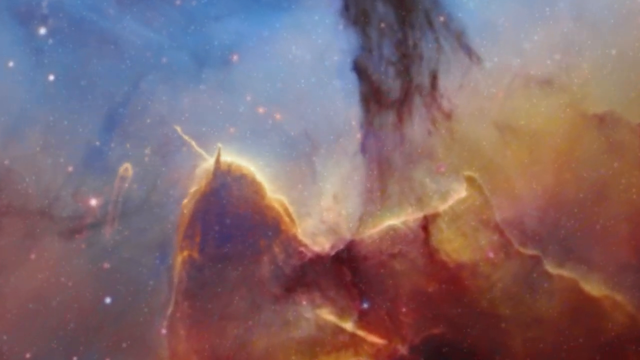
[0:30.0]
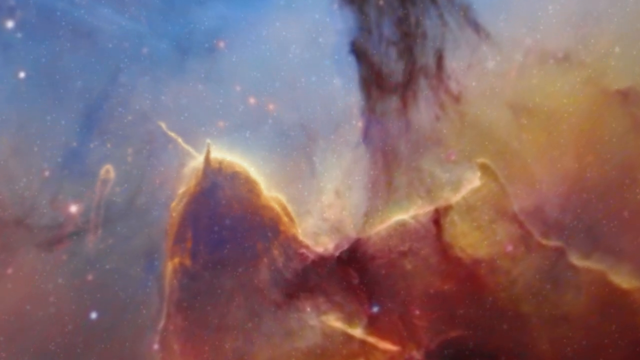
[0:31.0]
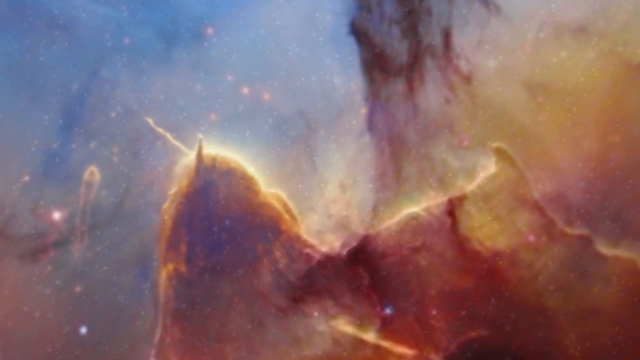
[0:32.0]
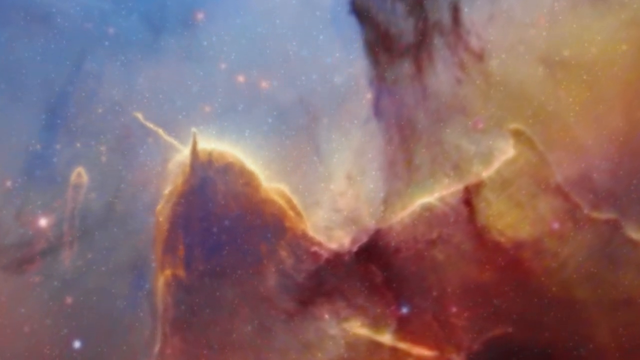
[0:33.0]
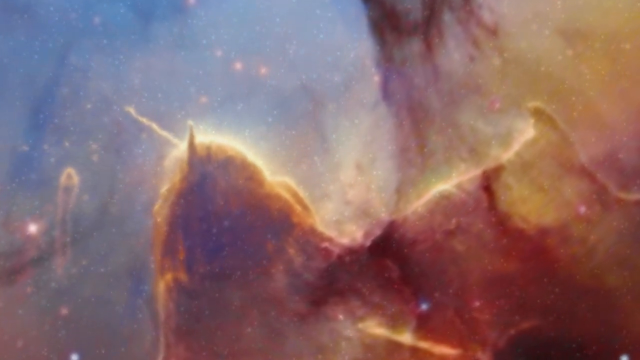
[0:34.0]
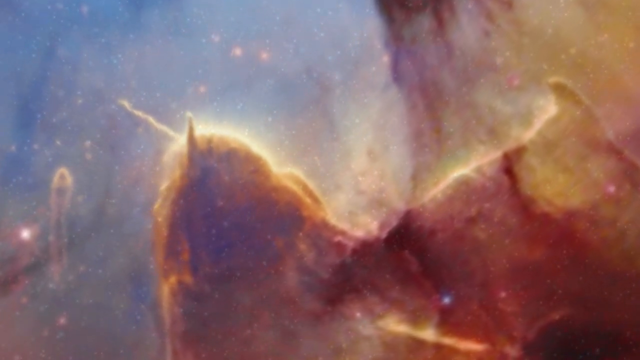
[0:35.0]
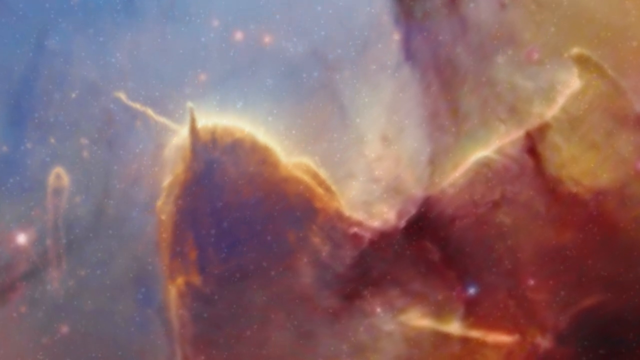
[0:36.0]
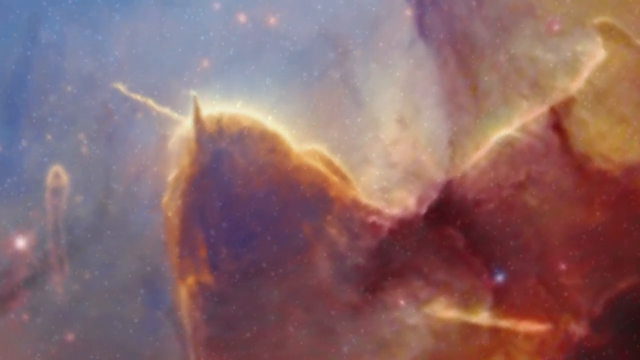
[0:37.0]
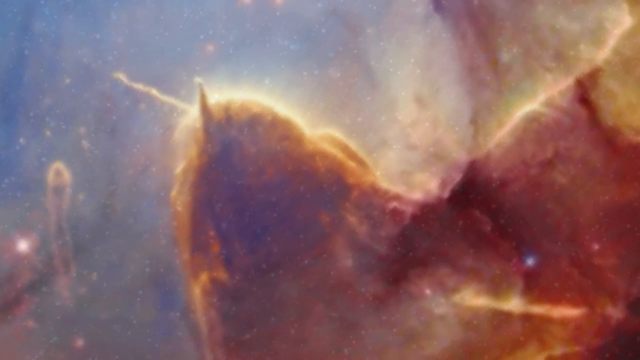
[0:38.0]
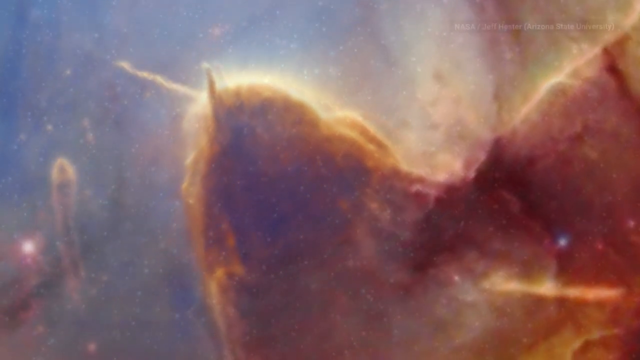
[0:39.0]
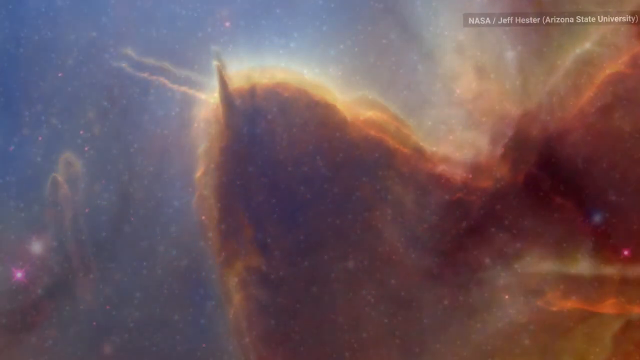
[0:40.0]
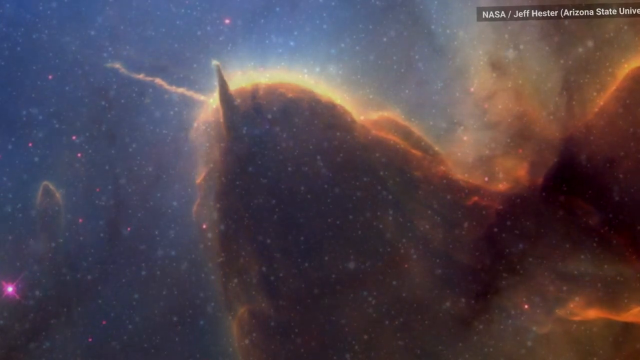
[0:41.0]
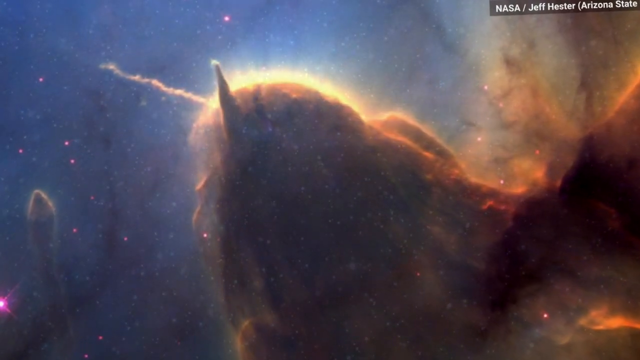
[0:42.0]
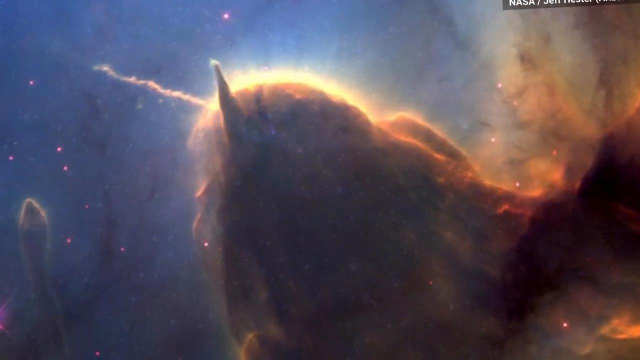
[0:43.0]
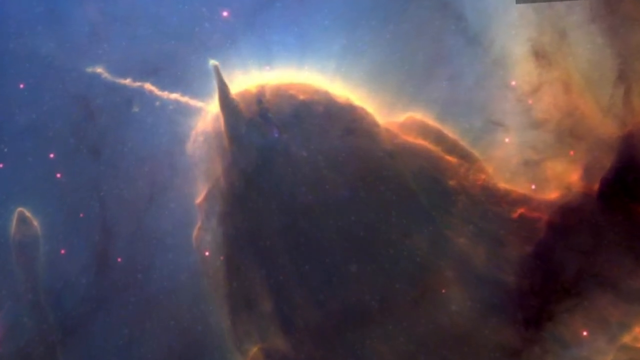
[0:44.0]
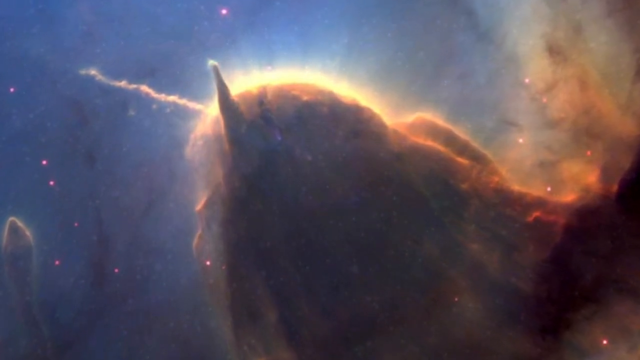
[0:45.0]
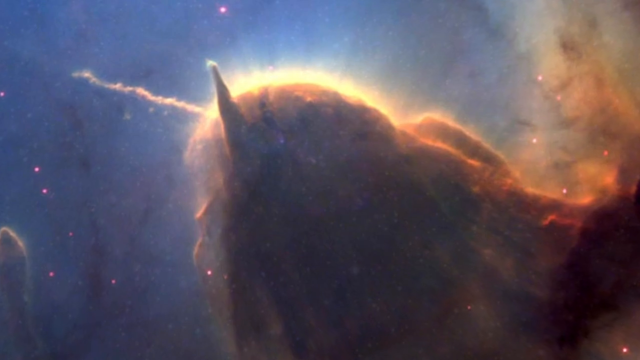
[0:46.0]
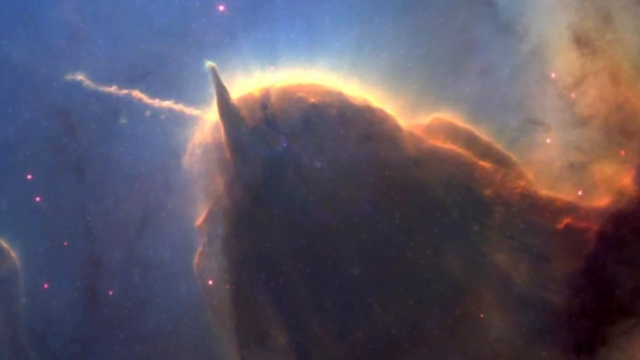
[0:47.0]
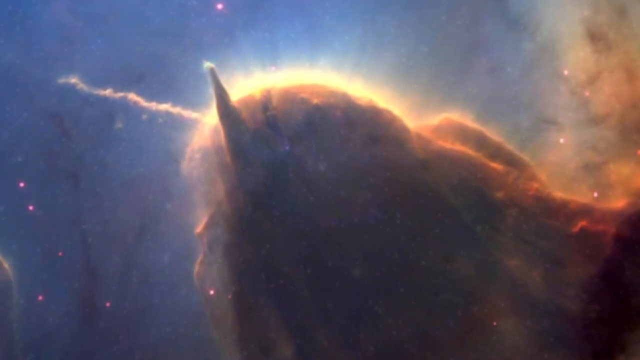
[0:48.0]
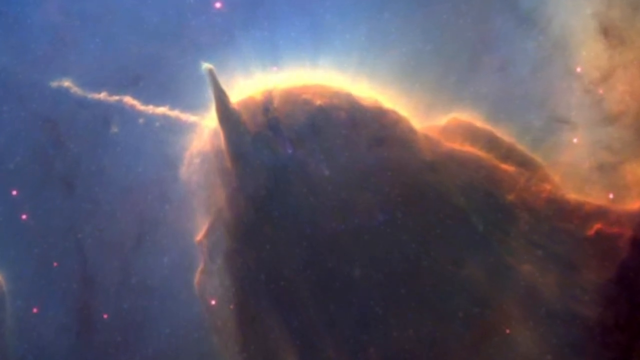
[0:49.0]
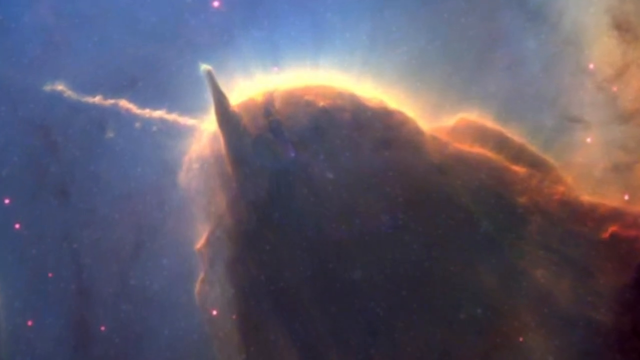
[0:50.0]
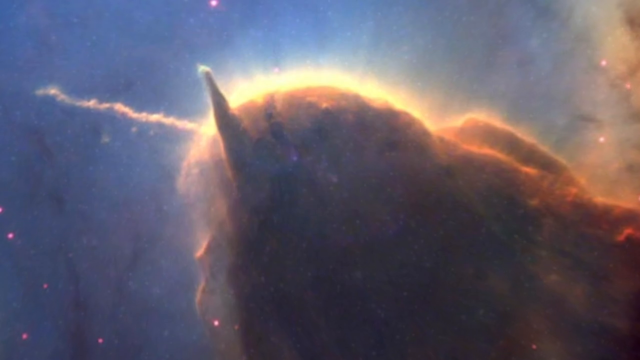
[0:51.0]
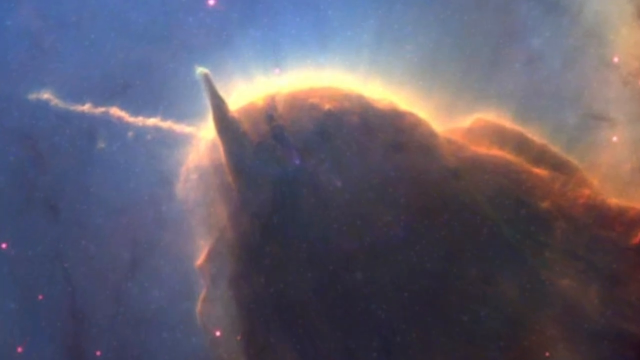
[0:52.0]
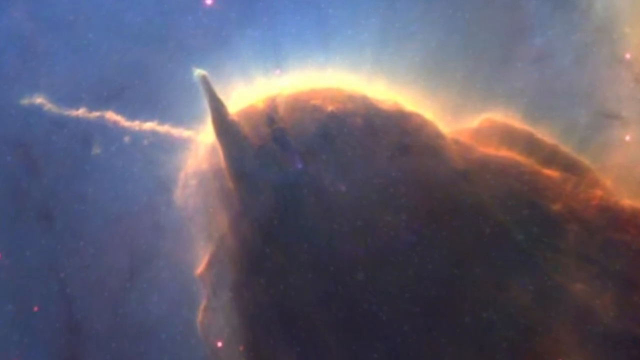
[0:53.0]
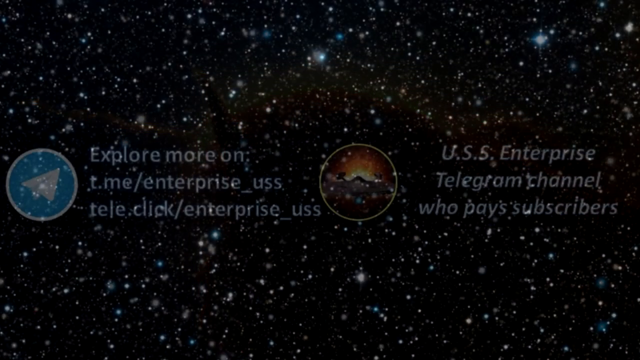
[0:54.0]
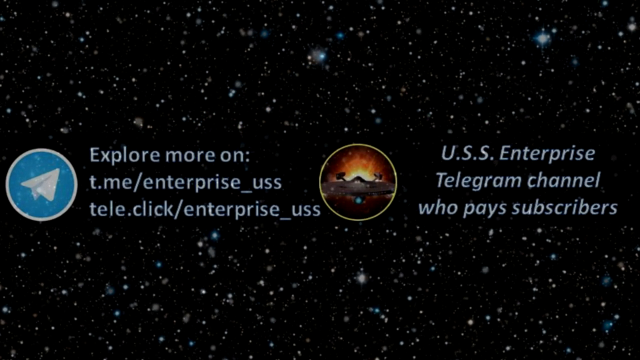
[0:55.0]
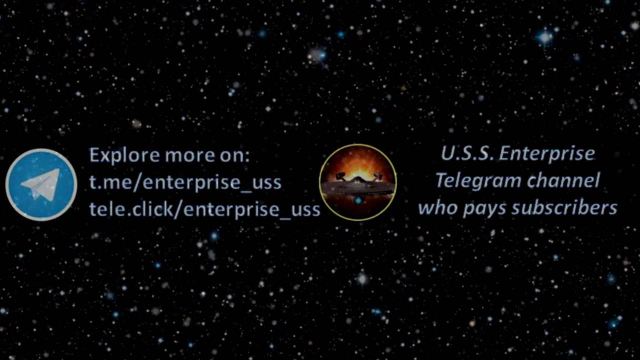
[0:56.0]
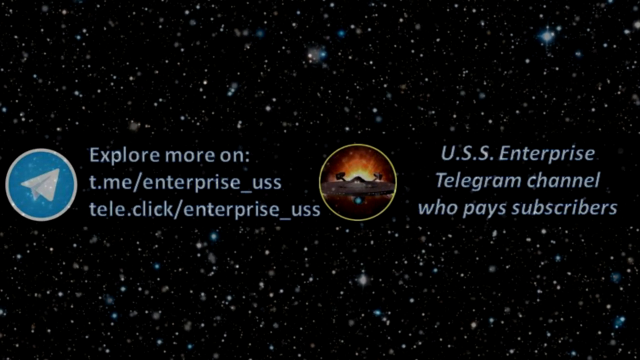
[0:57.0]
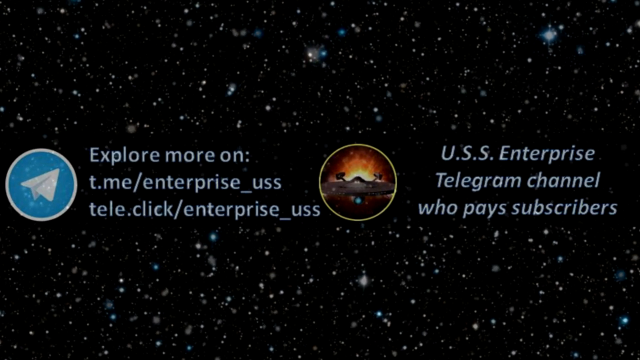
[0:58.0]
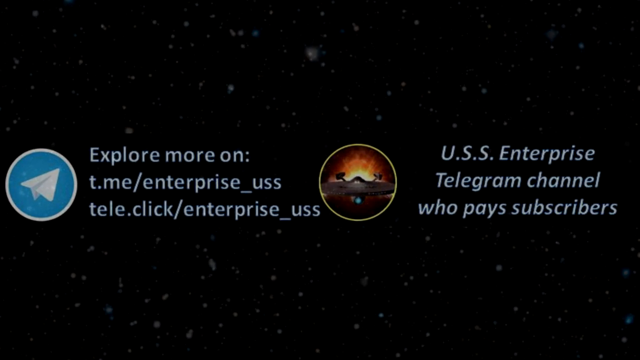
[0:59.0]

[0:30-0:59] The second image continues: kind of blue turning to milky white, with gold and yellow-red, and black tendrils on the right-hand side, apparently just a mix of different colors in space. The image kind of spins around the camera view. In the upper right, text apparently reads "NAFSA, Jeff, Hester," with "Arizona State" in parentheses. The image grows larger. This nebula is almost like a head, with what looks like a pointy ear and a horn coming off it. The top, where the head would be, is glowing yellow, and it gets darker and darker going down. The top of the image is all kind of blue with stars. The view keeps zooming in closer and closer to the head-like shape. At the end, the screen is all black with stars and shows a Telegram logo. Text reads "explore more on t.me/enterprise_USS", and underneath that "tele.click/enterprise_USS". There is a circular logo with a spaceship and a bright nebula-like image in front of the spaceship. To the right of it, text reads "USS Enterprise, telegram channel, who pays subscribers".